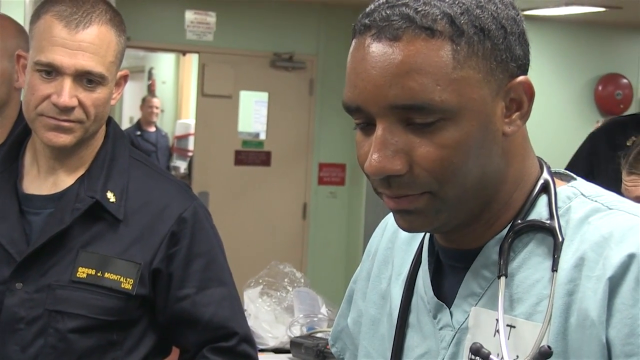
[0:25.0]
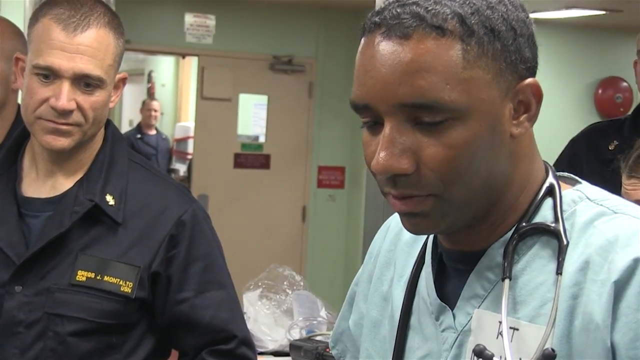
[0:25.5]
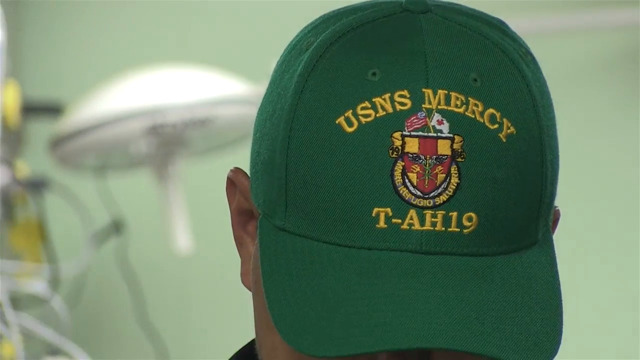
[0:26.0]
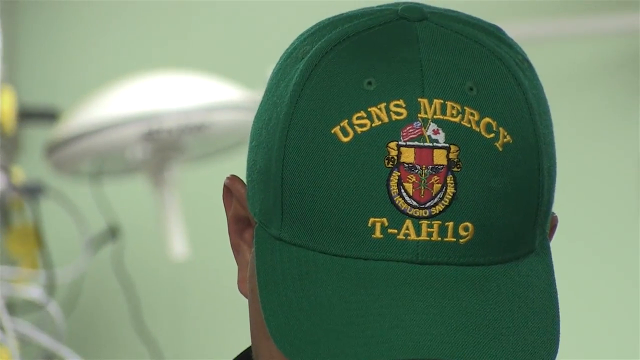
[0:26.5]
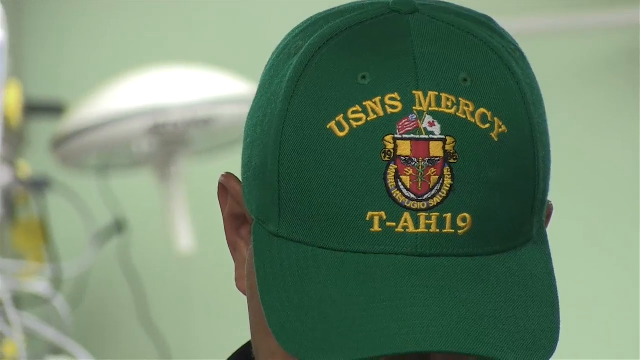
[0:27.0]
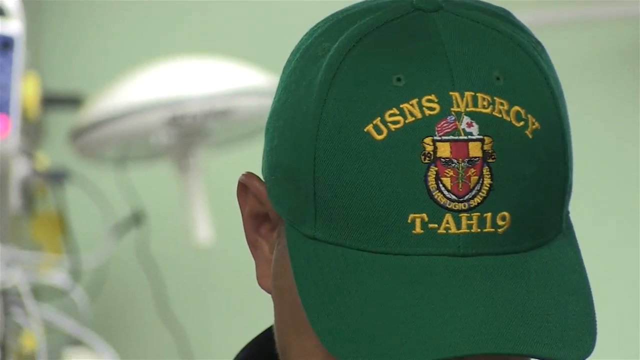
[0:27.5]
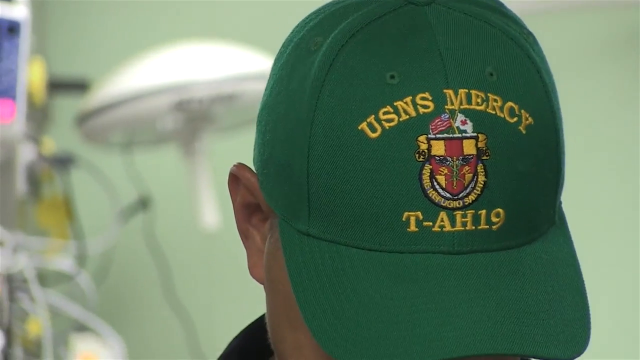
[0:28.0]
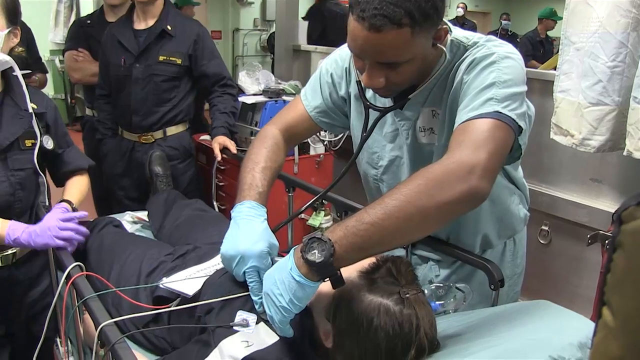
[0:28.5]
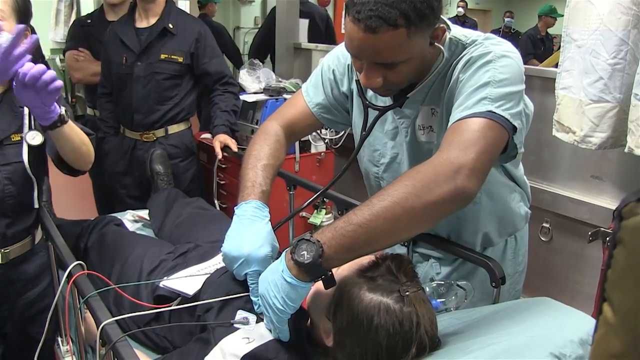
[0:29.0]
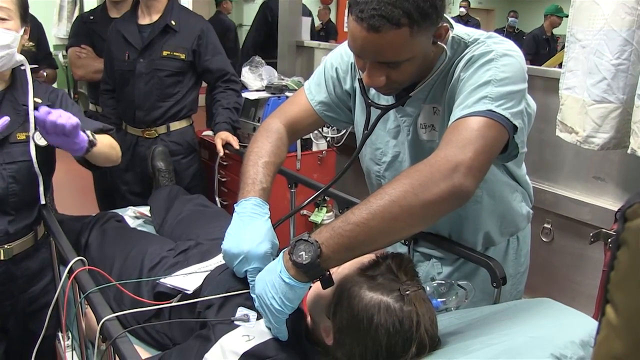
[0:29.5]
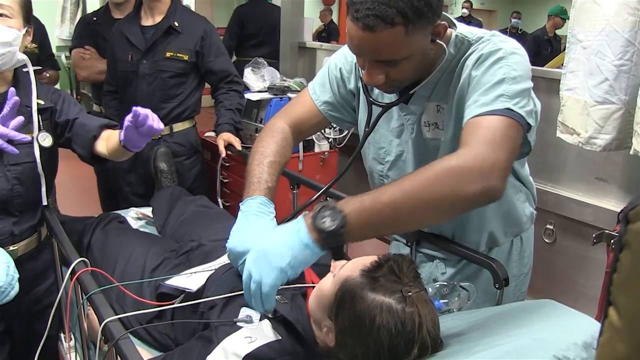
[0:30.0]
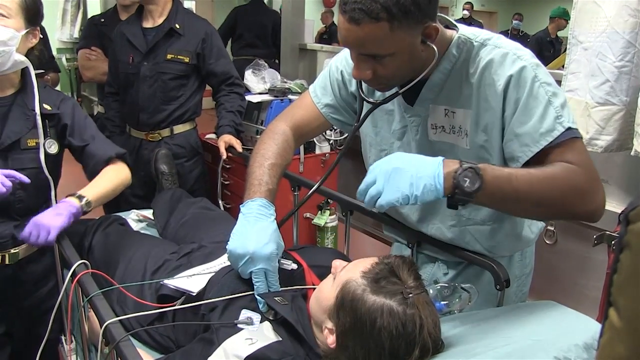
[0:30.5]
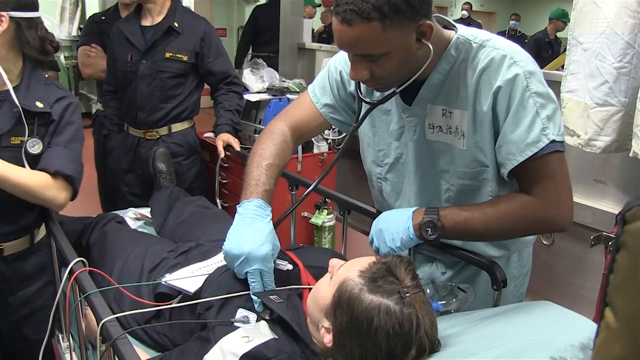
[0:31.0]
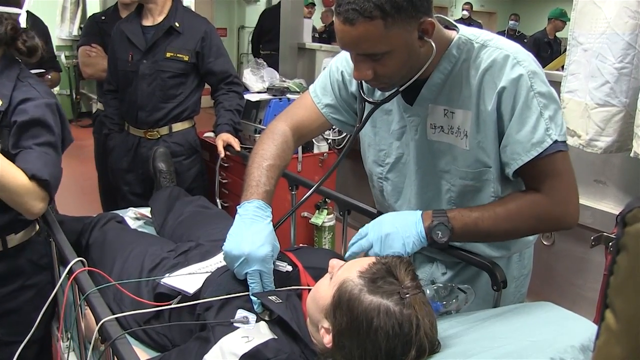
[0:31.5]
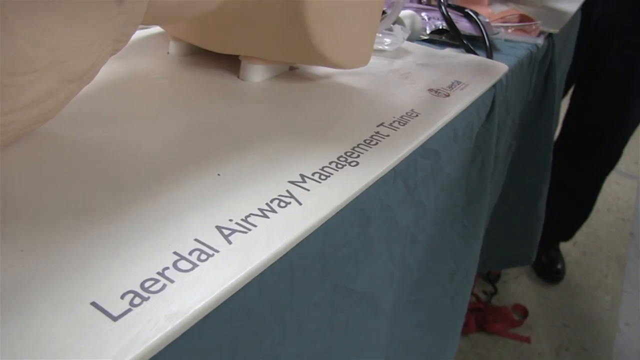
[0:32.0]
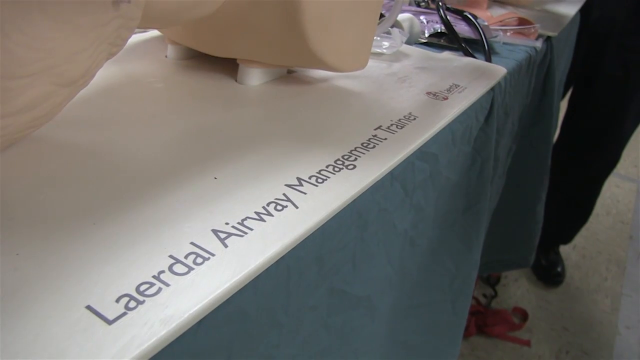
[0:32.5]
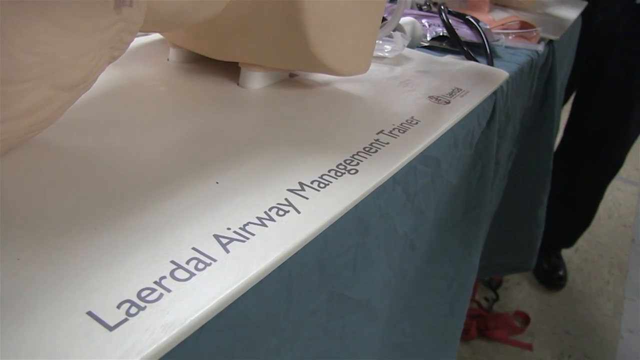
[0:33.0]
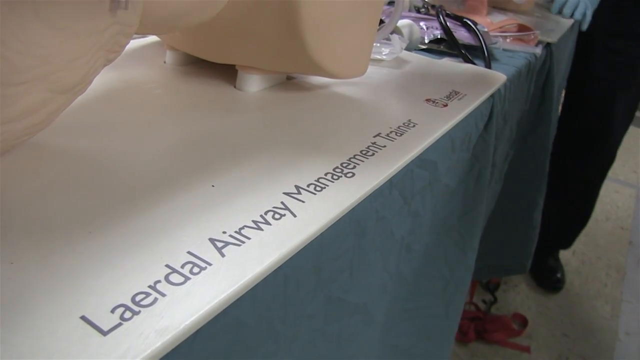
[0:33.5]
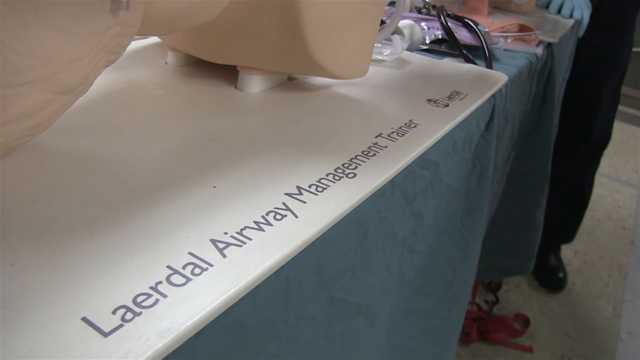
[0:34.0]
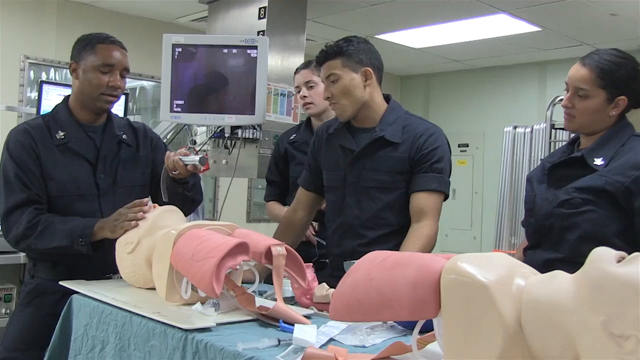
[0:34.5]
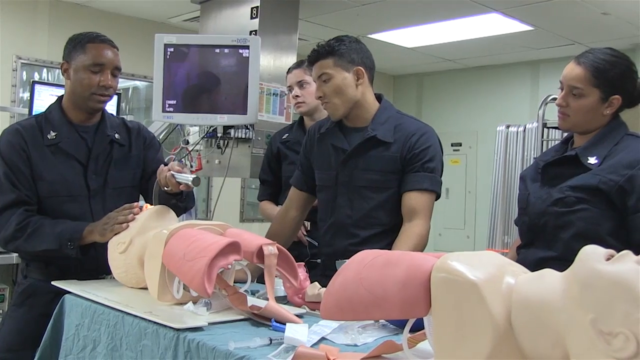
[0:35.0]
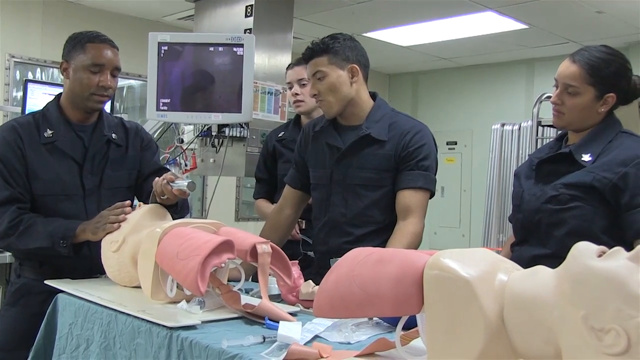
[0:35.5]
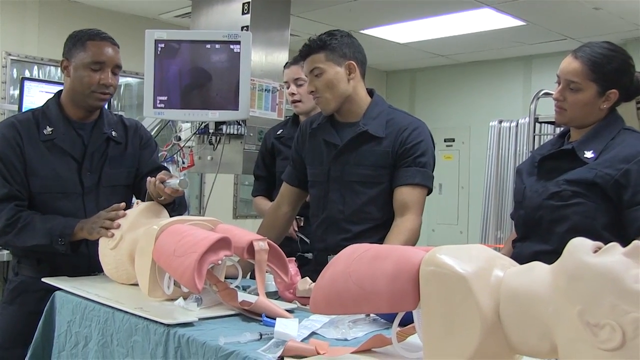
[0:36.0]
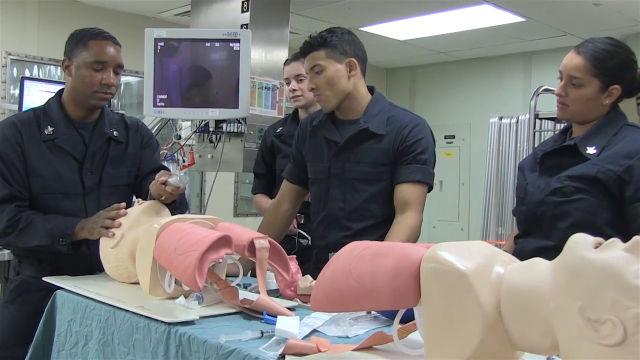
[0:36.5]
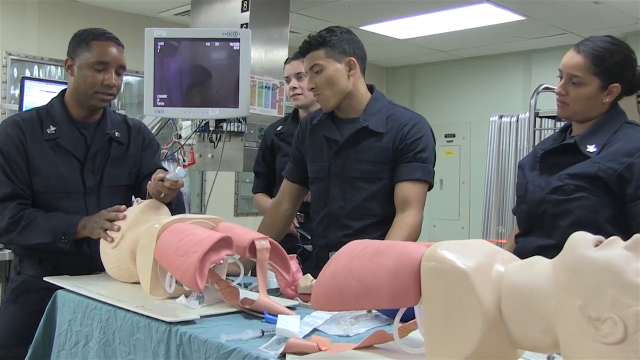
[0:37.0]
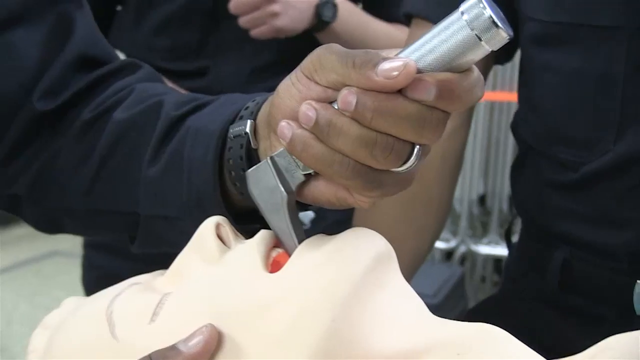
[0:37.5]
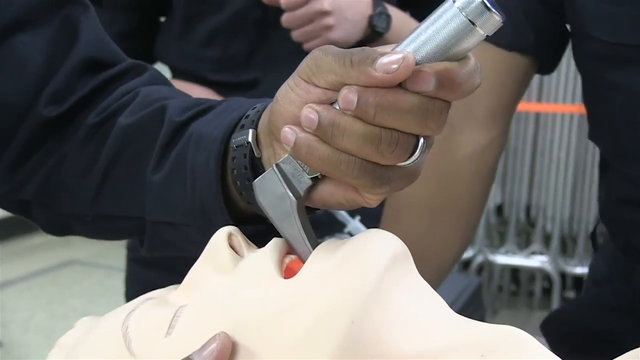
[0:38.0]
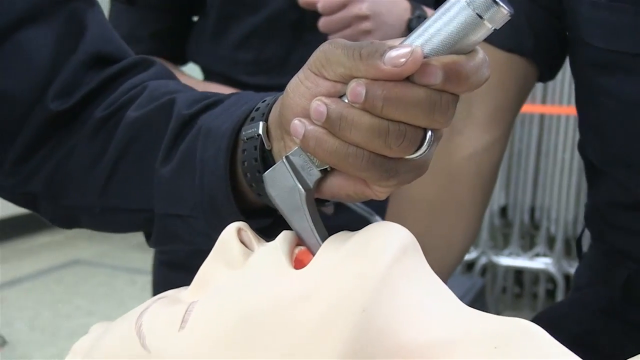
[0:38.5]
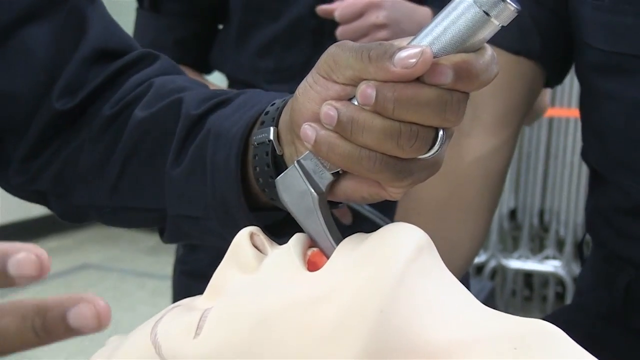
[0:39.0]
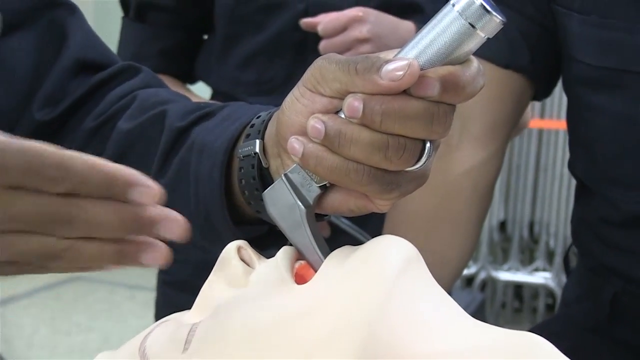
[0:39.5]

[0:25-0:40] Cortez Brown, the respiratory therapist, examines a patient while a group of people stand around him watching what he is doing. He seems to be talking to a nurse. There is a close-up of a man's hat that says "USNS Mercy T-AH19"; the man is looking down and his face cannot be seen. The respiratory therapist then listens to the man's heart, possibly his lungs, as people look on. The patient lies flat on the bed. There is a lateral airway management trainer, a dummy-type doll used for practice. Cortez gives a demonstration to the people looking on, using something that almost looks like a claw-type hammer under the bottom jaw to open the mouth, possibly to keep the tongue down.